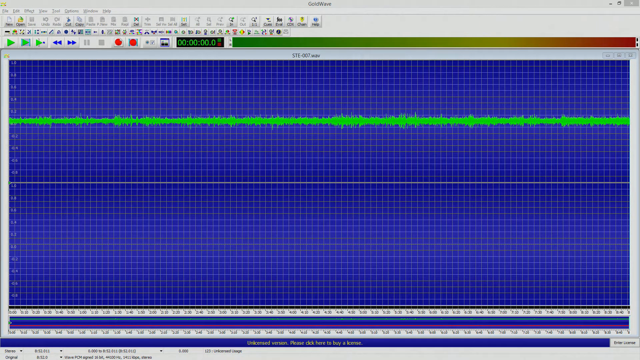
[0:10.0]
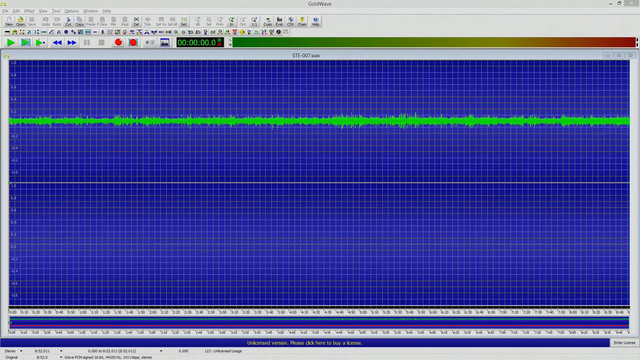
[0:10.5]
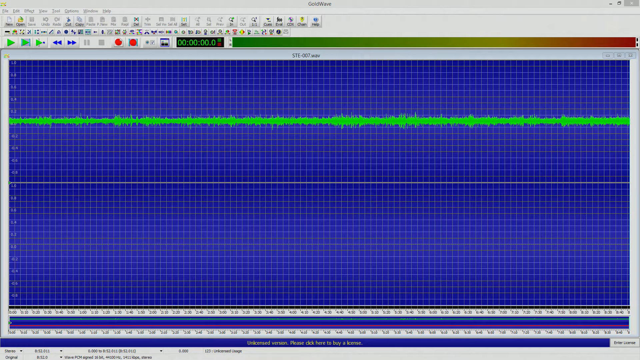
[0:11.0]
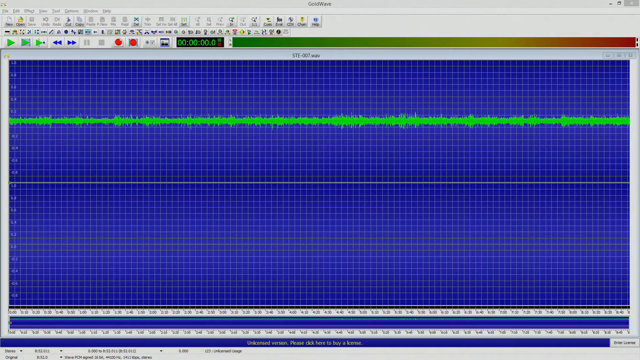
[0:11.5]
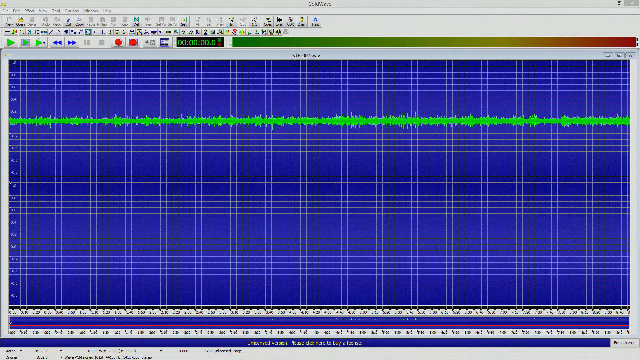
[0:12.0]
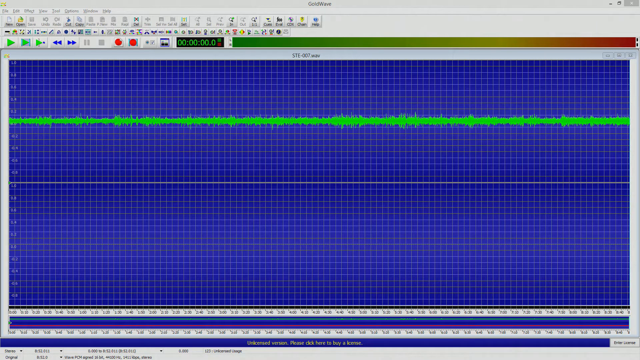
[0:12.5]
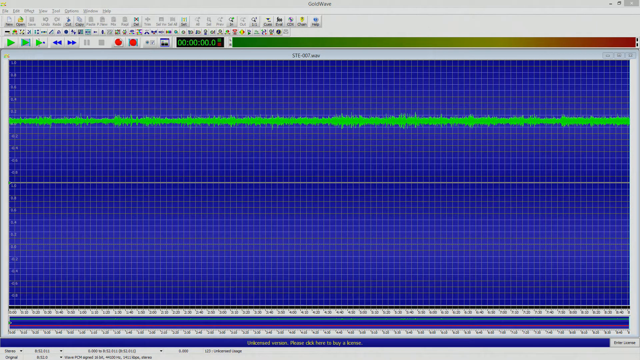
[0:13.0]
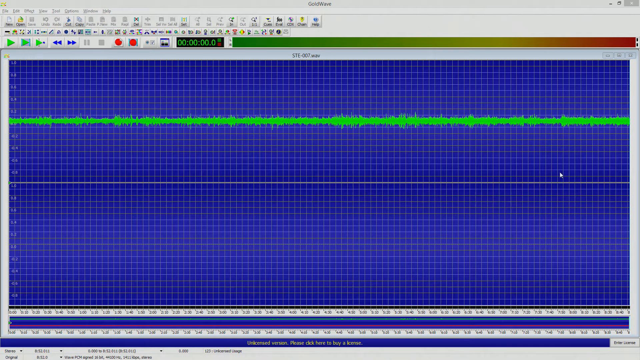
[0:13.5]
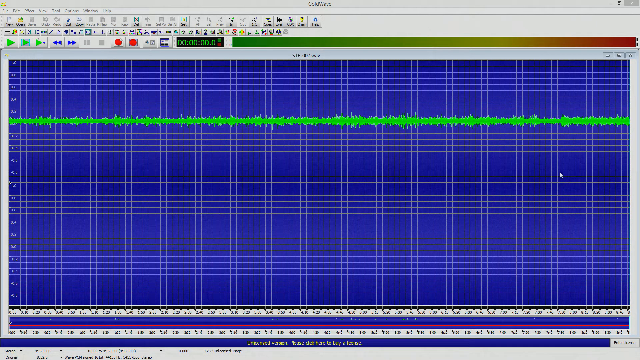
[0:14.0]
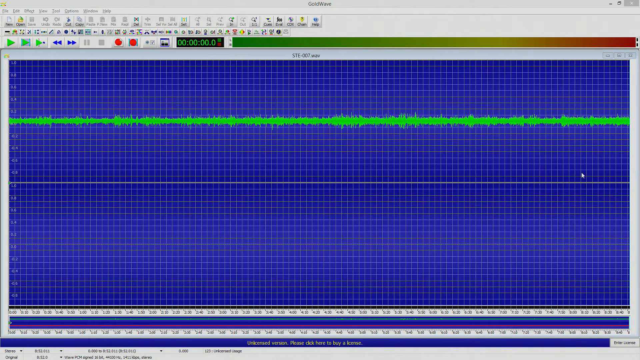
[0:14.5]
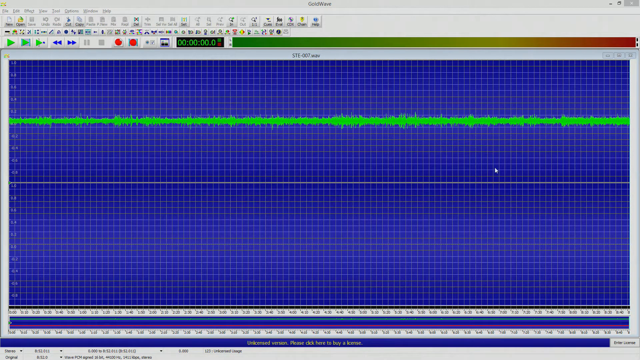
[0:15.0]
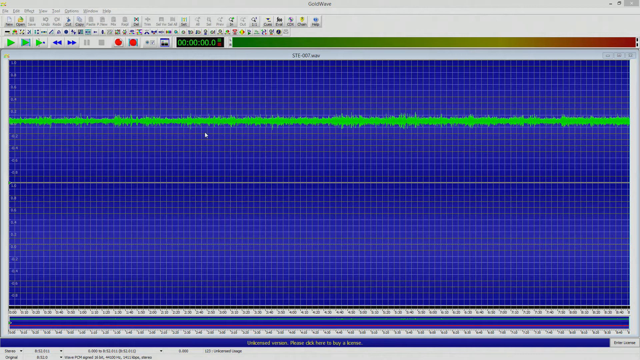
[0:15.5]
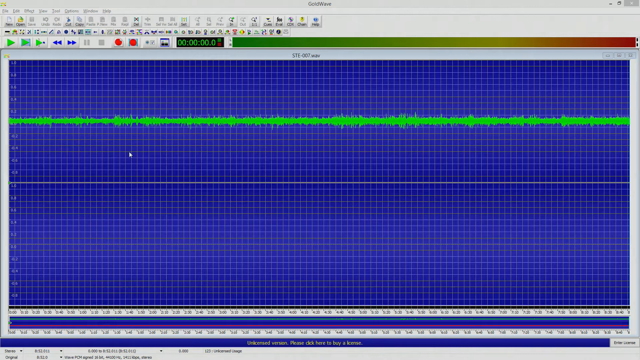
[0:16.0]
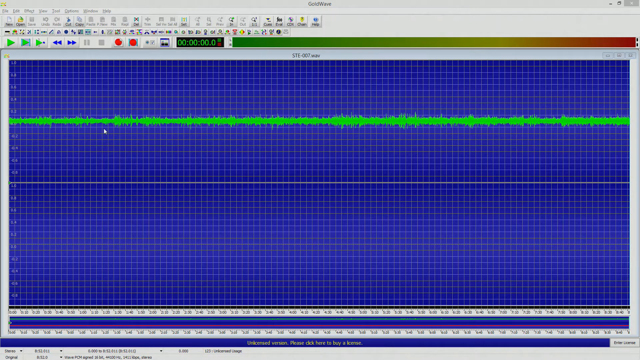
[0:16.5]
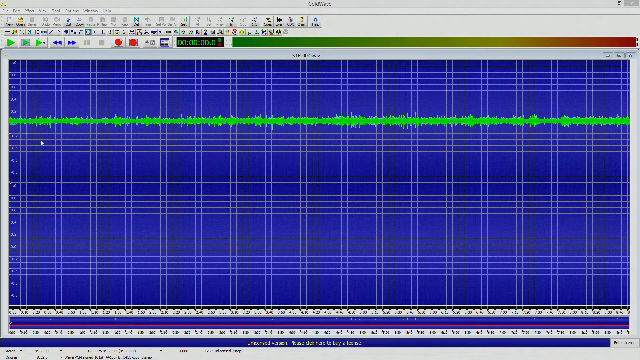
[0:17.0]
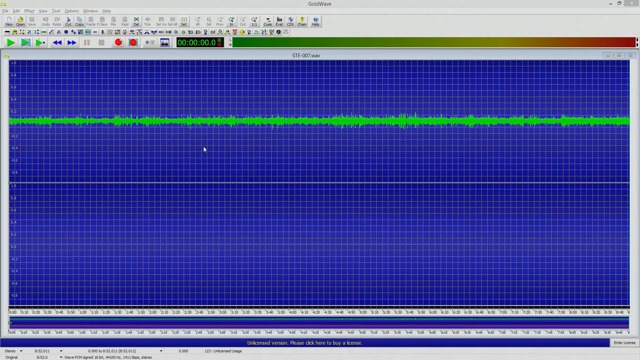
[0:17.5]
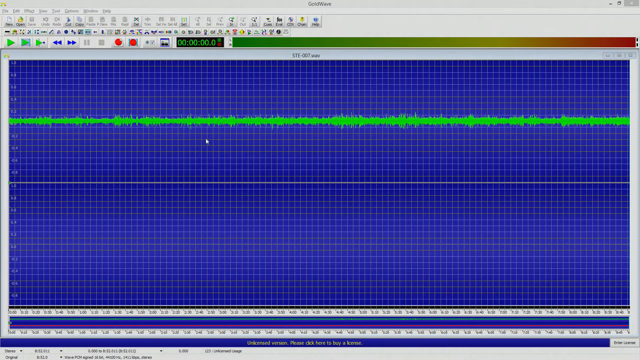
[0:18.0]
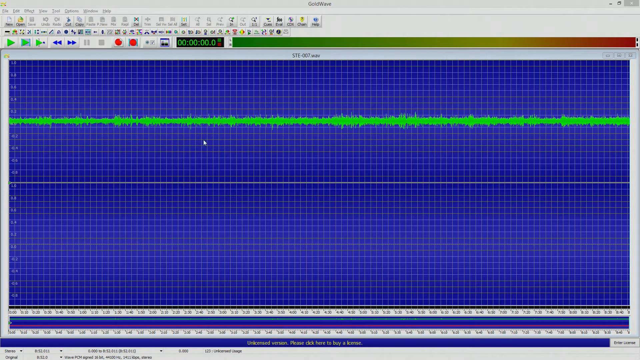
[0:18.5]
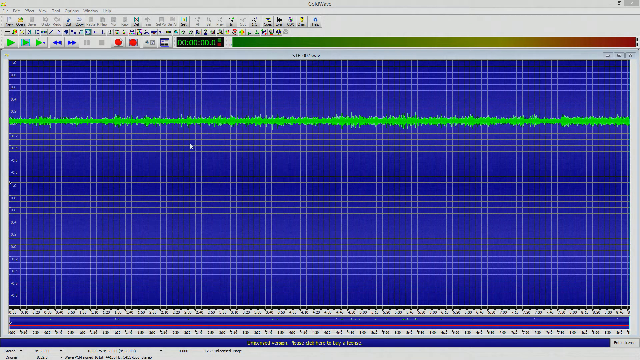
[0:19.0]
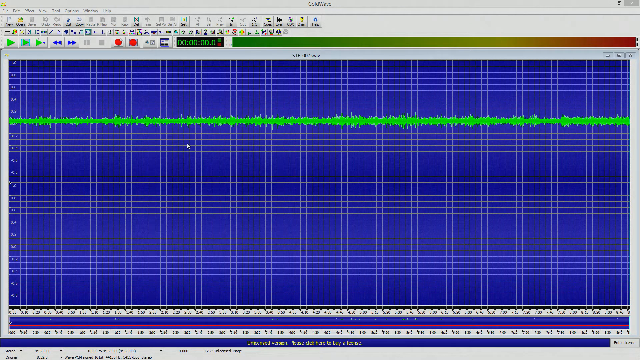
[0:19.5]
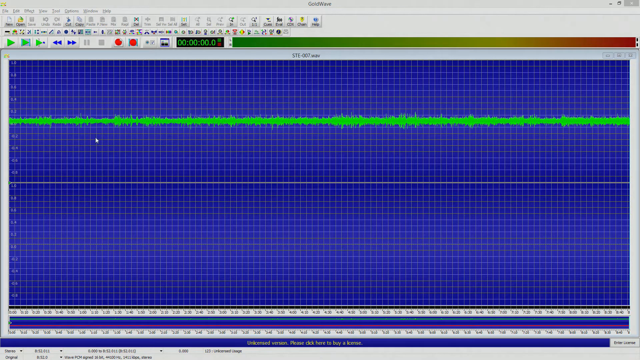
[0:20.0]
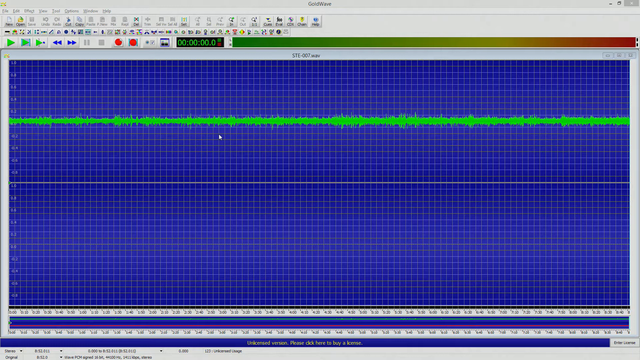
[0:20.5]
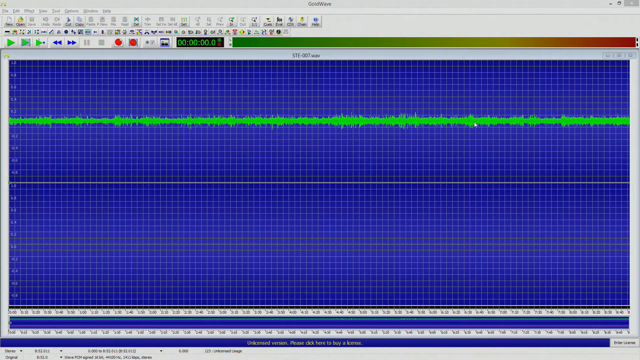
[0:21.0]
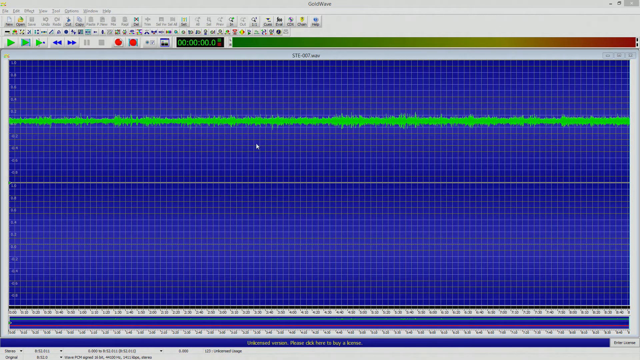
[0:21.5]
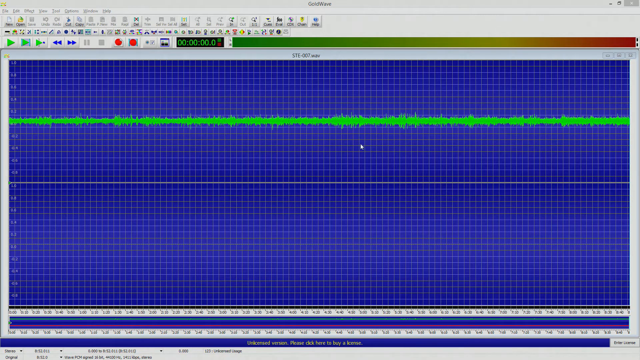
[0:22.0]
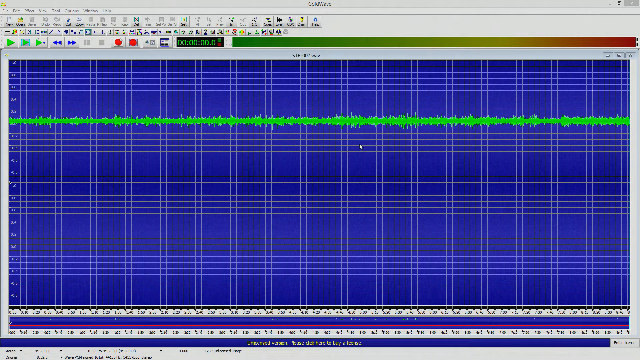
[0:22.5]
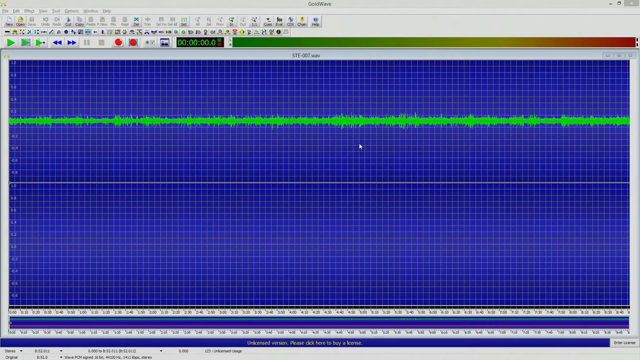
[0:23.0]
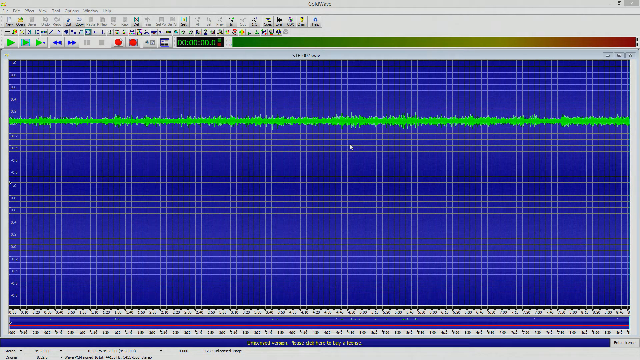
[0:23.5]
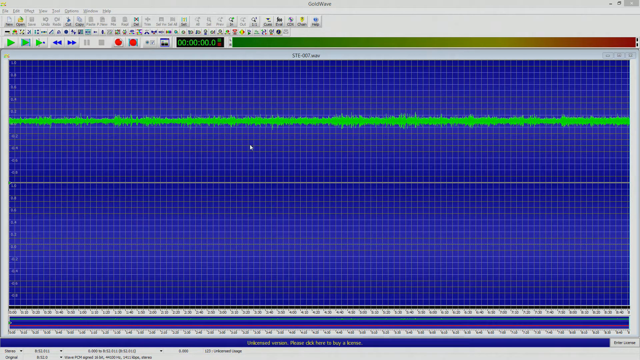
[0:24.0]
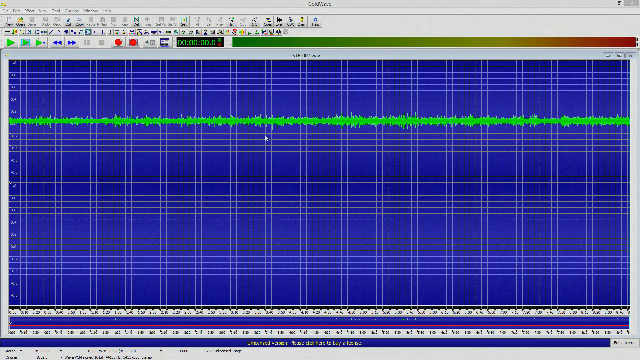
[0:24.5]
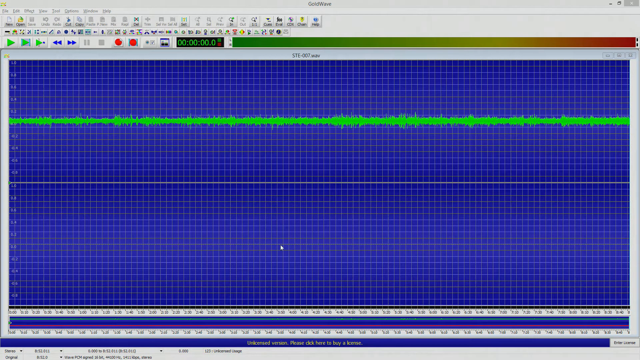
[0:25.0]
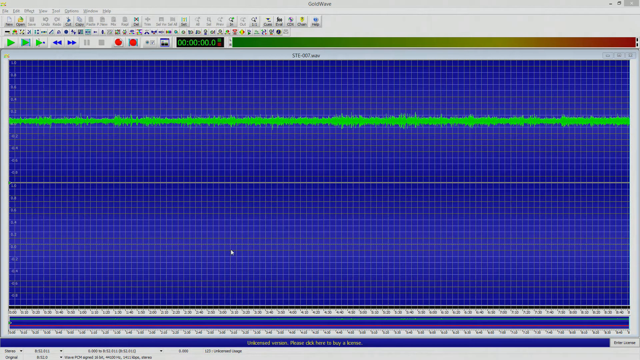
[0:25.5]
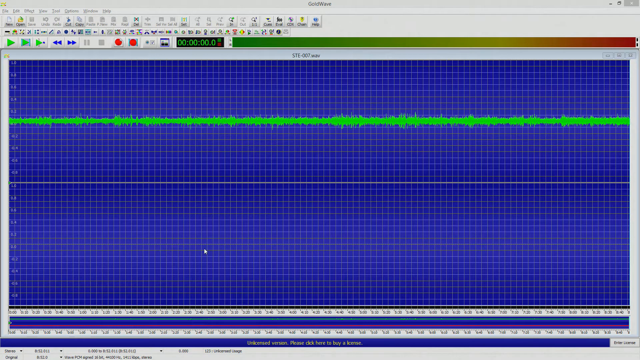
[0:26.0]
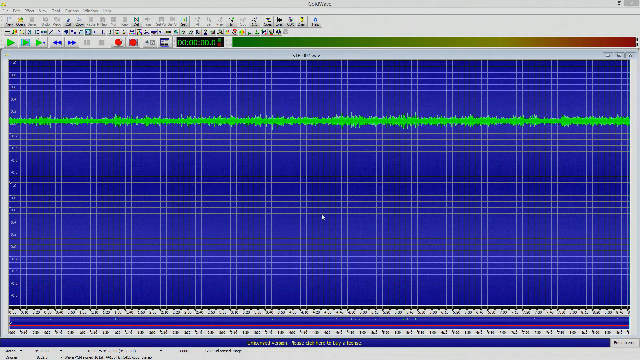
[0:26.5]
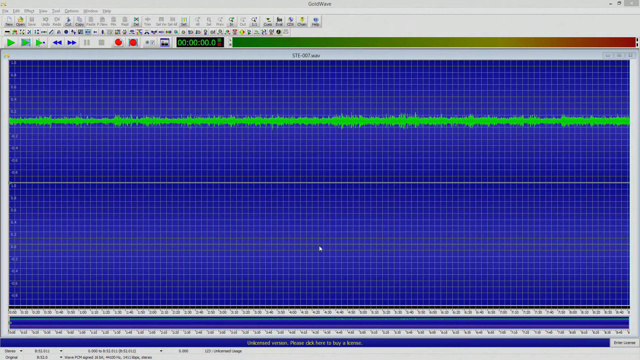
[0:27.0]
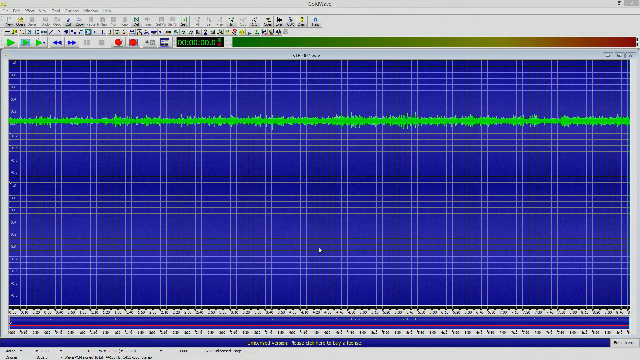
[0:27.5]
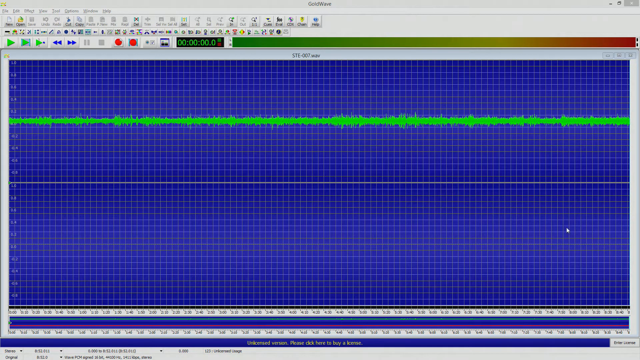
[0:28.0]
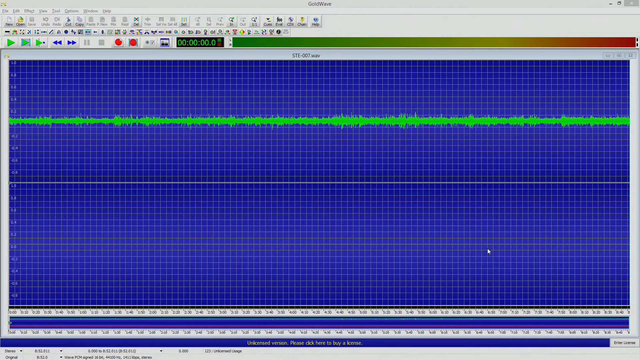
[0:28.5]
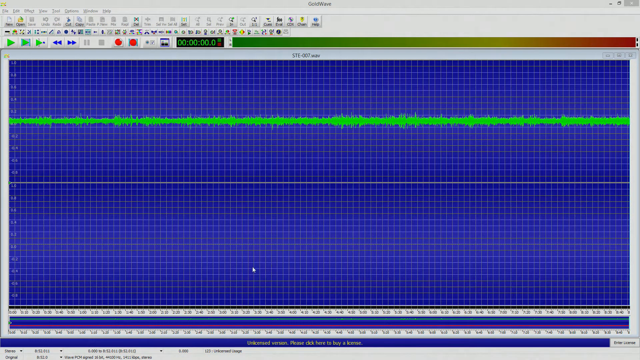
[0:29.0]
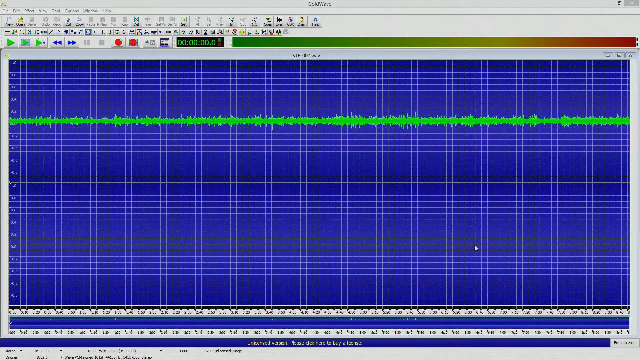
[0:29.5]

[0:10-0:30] The bright purple-blue screen appears to be on a computer page. Someone moves a cursor along the lime green line, which runs from left to right; it is not solid and has jagged edges, looking as if it may be measuring something, though what is unclear. The background is not solid but graph-like, with small boxes. There appear to be measurements along the left side of the screen. At the bottom are two white borders with numbers running horizontally inside them. The cursor moves up and down, showing two faint lines under the green line: a solid gray line and, beneath it, a very, very faint gray line.